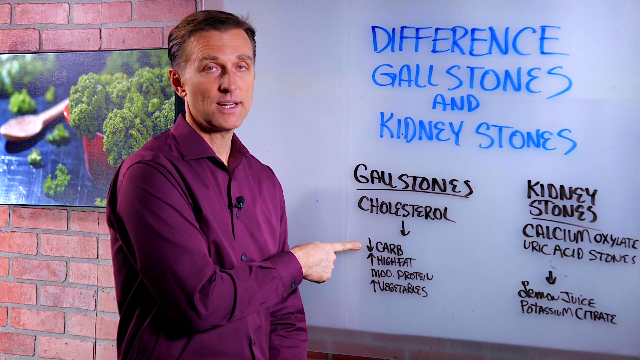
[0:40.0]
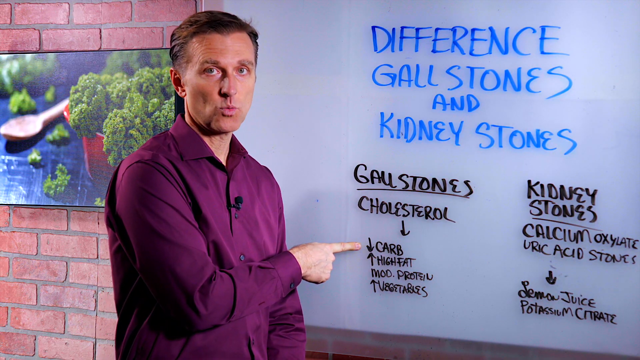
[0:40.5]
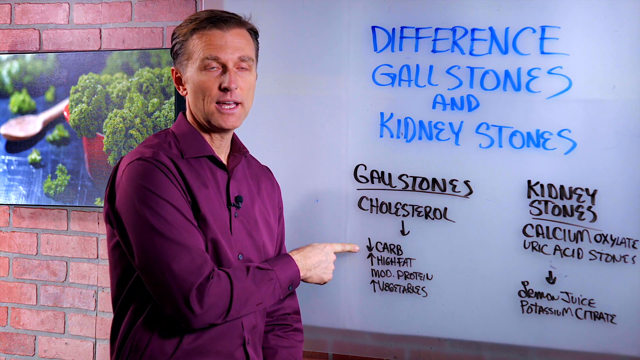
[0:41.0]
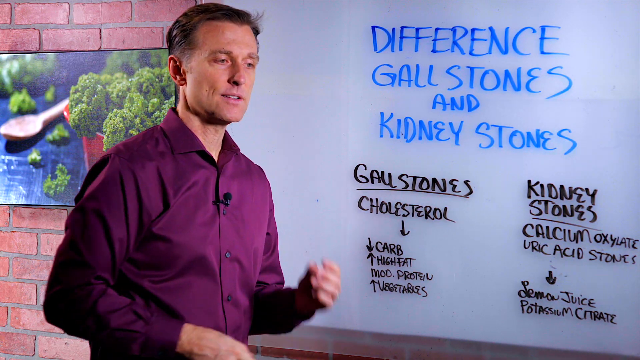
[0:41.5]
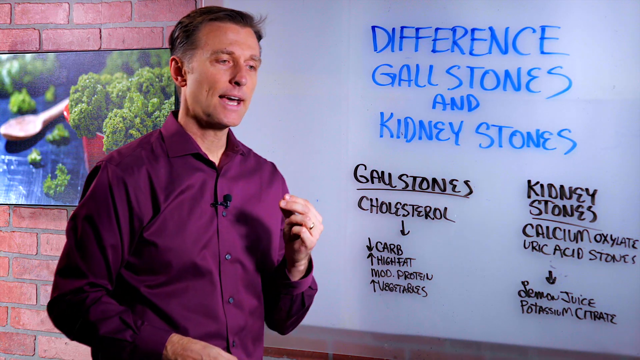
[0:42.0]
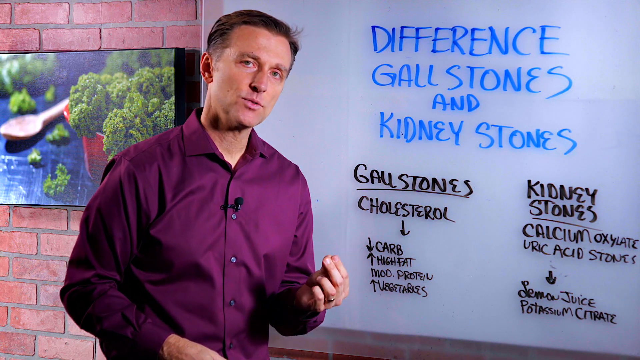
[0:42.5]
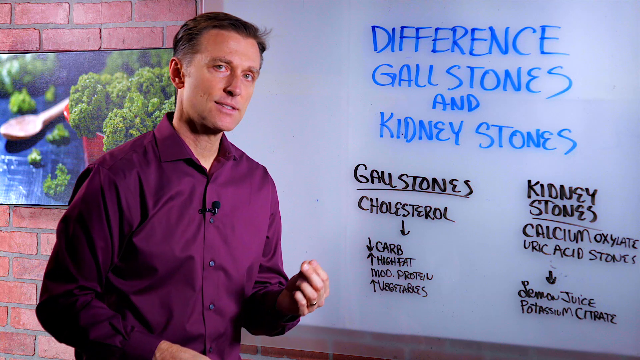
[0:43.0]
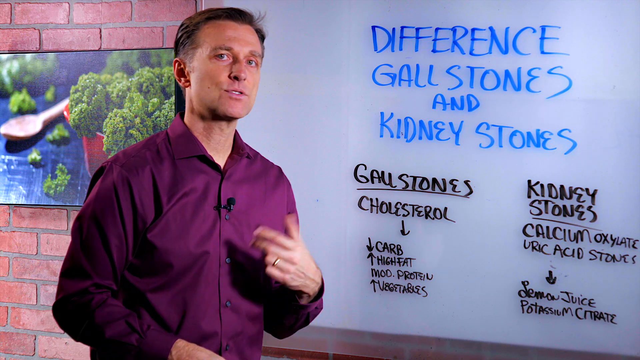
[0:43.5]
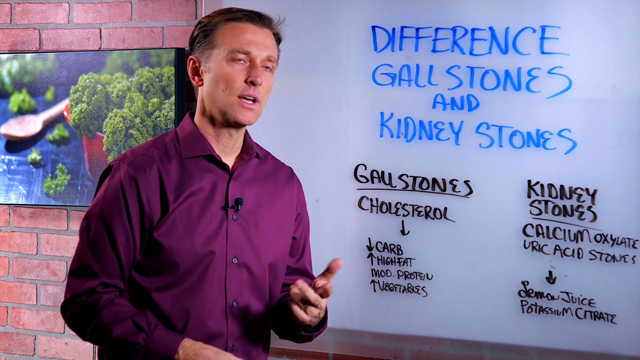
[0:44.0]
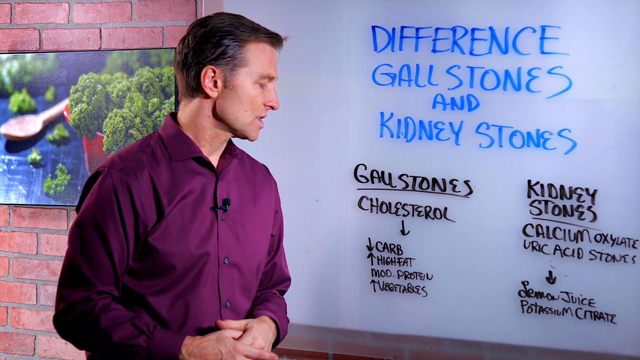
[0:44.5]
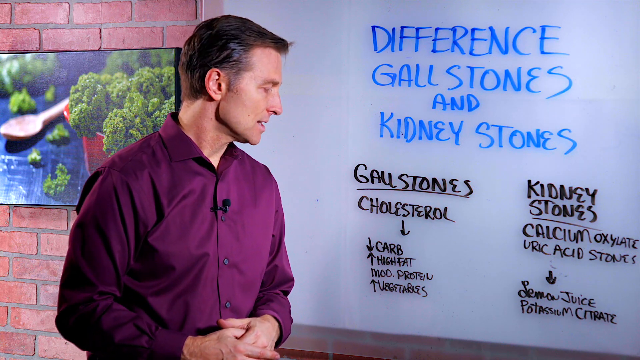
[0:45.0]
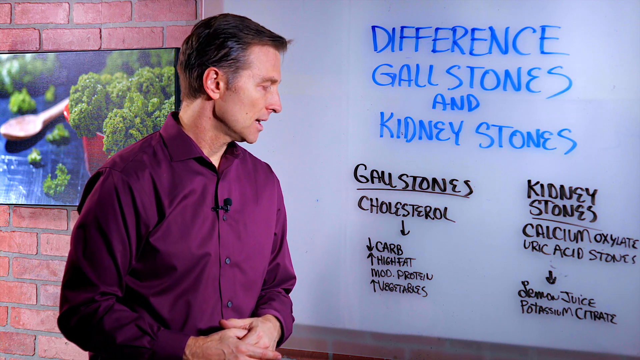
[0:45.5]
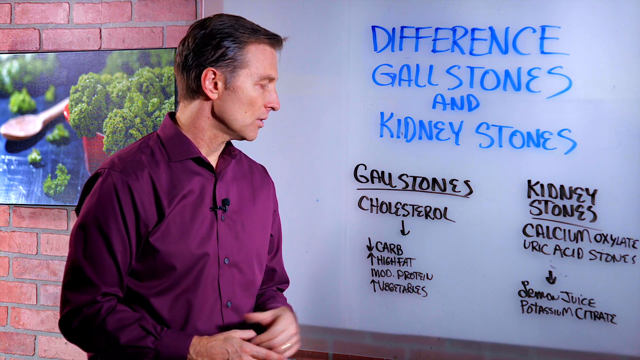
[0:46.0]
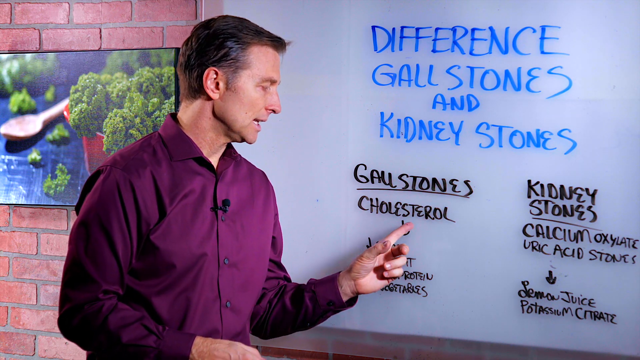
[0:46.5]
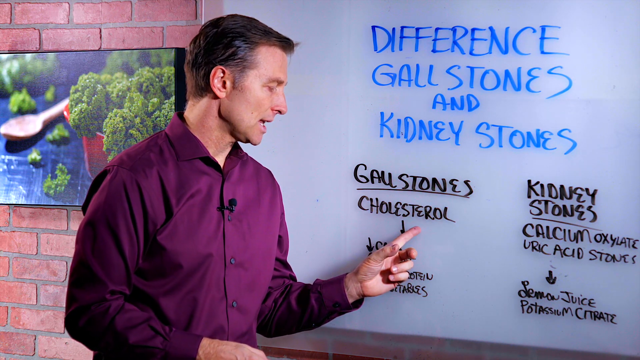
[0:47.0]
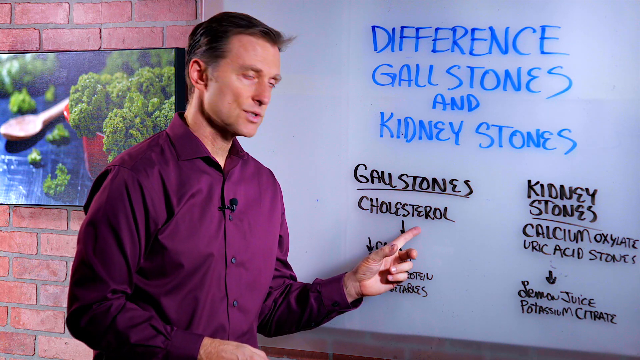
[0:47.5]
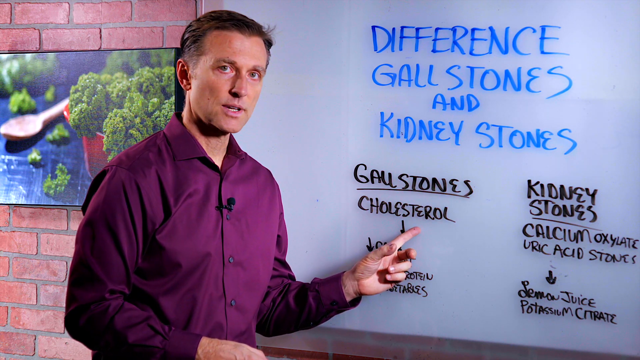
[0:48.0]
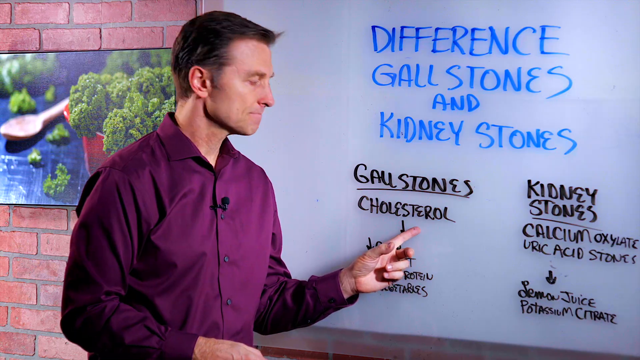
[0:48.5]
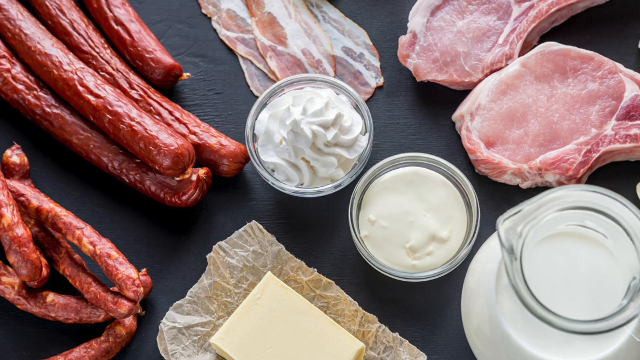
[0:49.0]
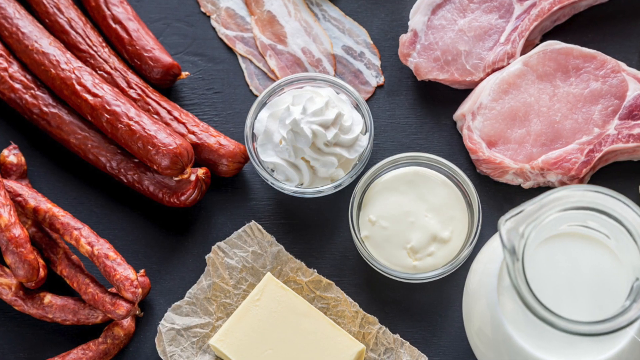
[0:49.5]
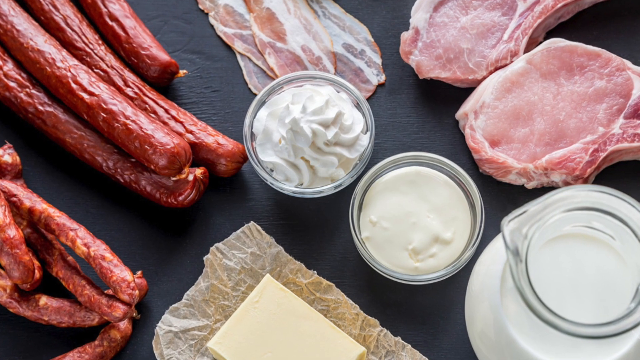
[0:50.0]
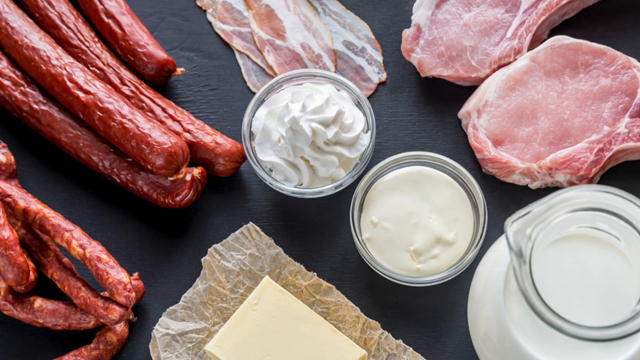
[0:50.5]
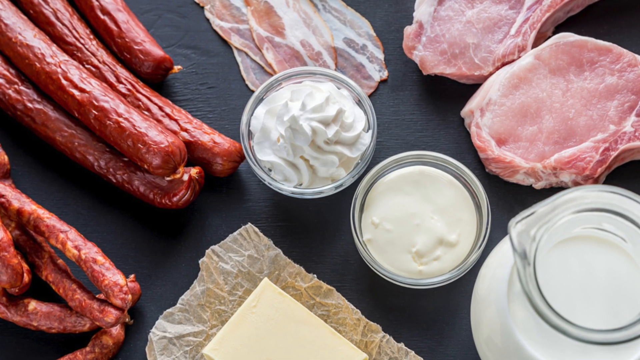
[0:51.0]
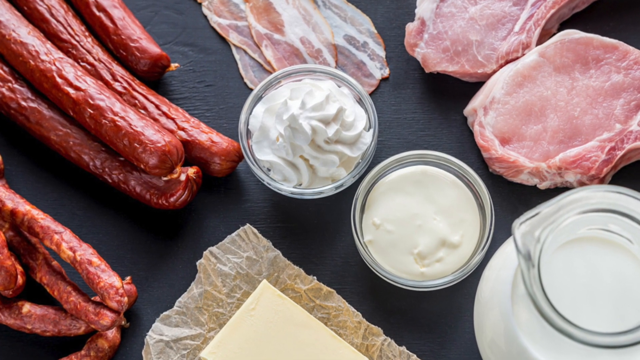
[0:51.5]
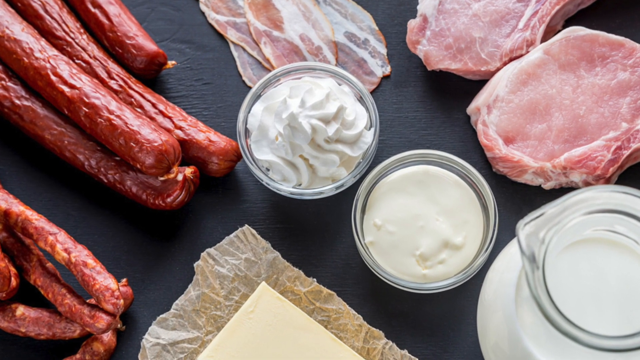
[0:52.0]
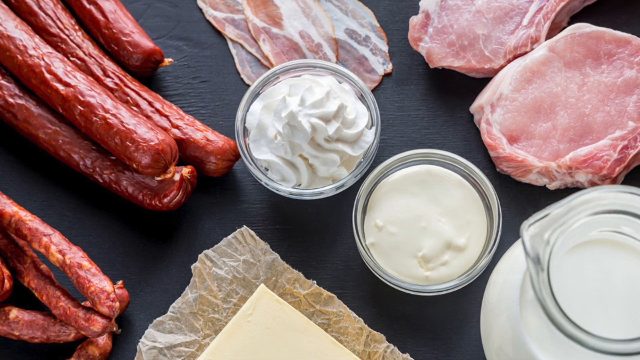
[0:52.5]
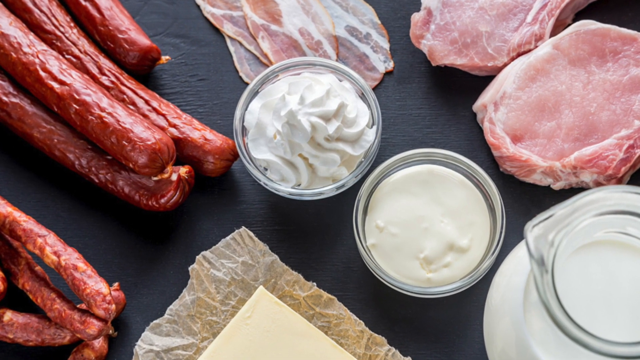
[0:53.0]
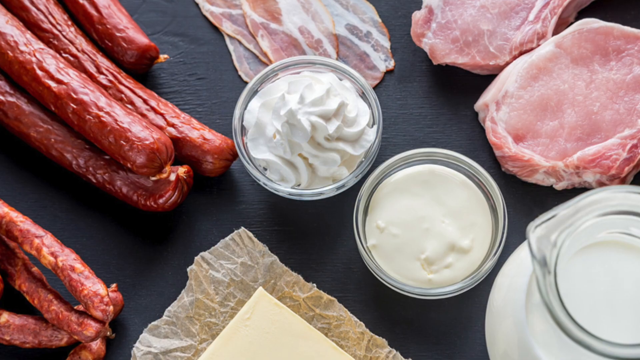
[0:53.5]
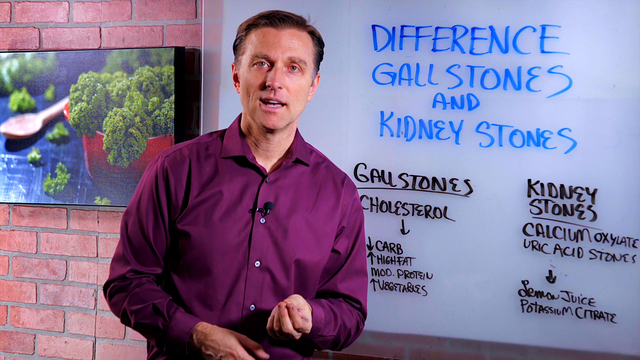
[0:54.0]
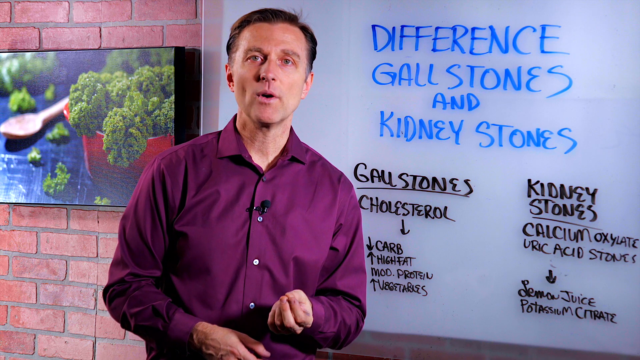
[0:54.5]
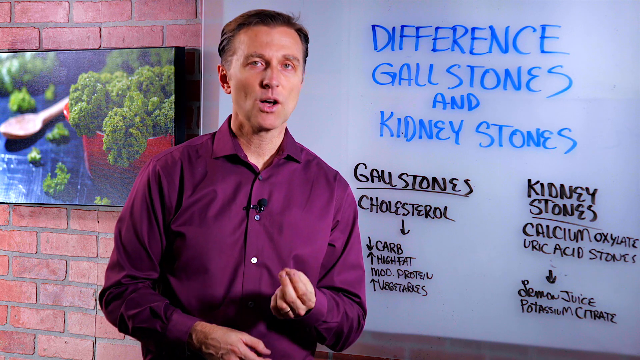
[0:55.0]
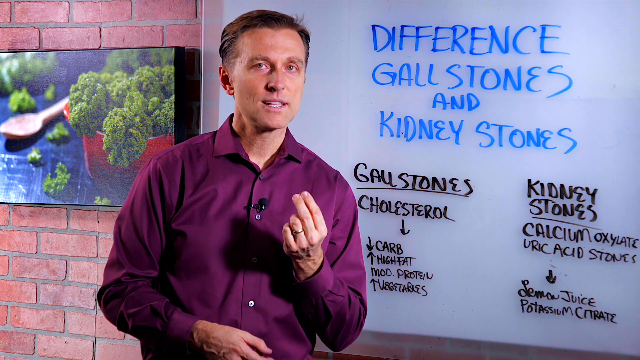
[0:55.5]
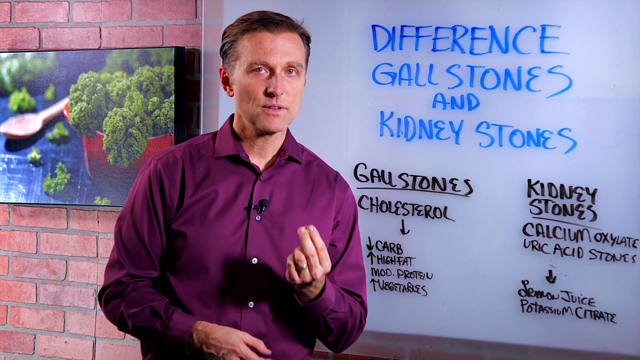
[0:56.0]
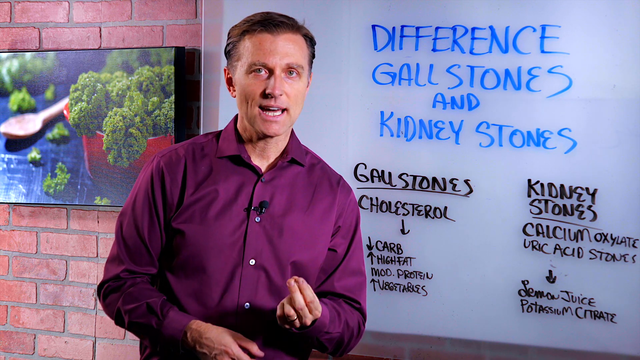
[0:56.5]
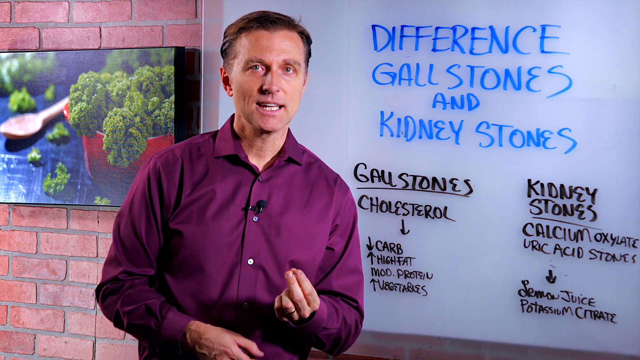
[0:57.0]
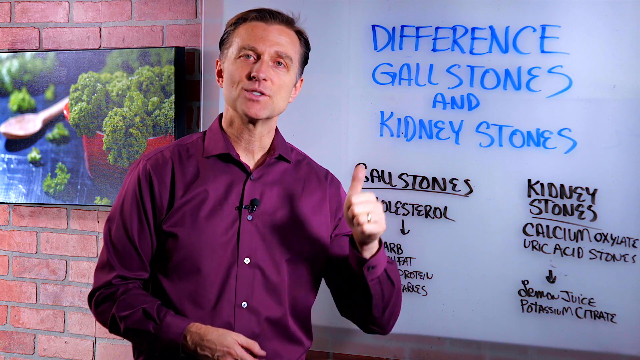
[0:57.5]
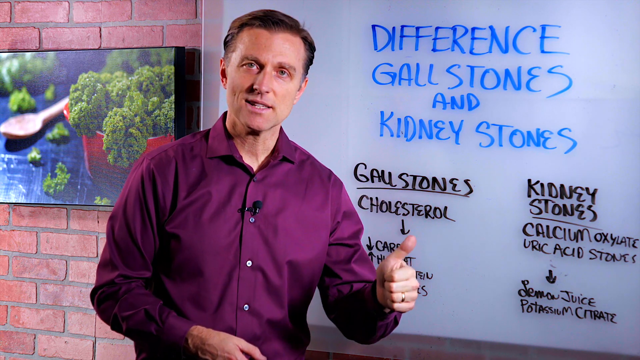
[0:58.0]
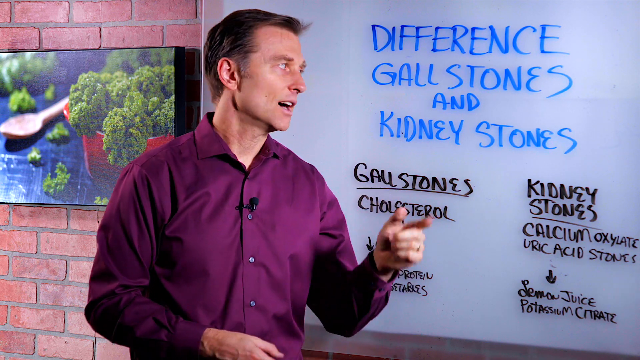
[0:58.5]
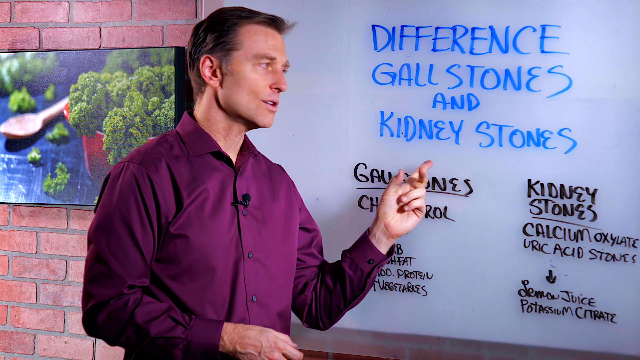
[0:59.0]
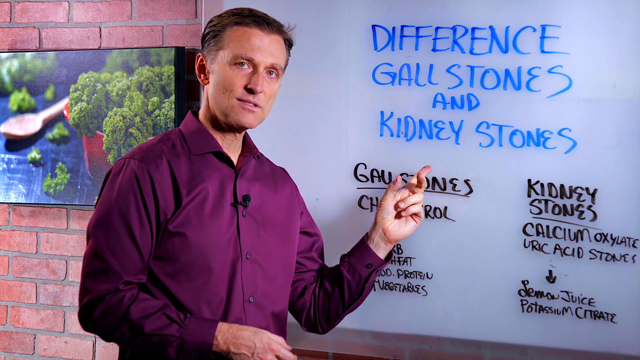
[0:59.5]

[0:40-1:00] The Caucasian man with short brown hair, parted toward his right, has a whiteboard behind his left shoulder and a red brick wall with a wall hanging behind his right shoulder. He begins by pointing at the down arrow on his whiteboard as he speaks. He then pinches the index and middle fingers of his left hand with his thumb and moves them up and down to stress a point. He looks at the whiteboard and points again toward "cholesterol". An image then shows a black tabletop or surface with several food items. On the left are two different kinds of a sausage-type meat that looks dehydrated. In the upper middle are several pieces of bacon stacked, and to the right of that appear to be two bone-in pork chops. In the bottom right corner is a white liquid, with a clear bowl of a white substance in front of it and, to the left of that, a clear bowl of a white cream-type substance. Below the clear bowls is a piece of parchment paper with a slice of what looks like cheese. The camera zooms in on the two clear bowls of white substances, then returns to the man speaking in front of the whiteboard.